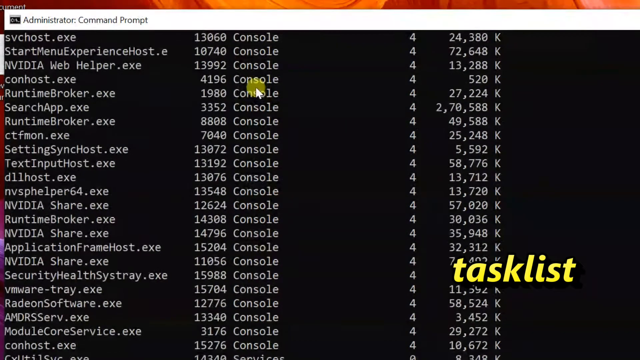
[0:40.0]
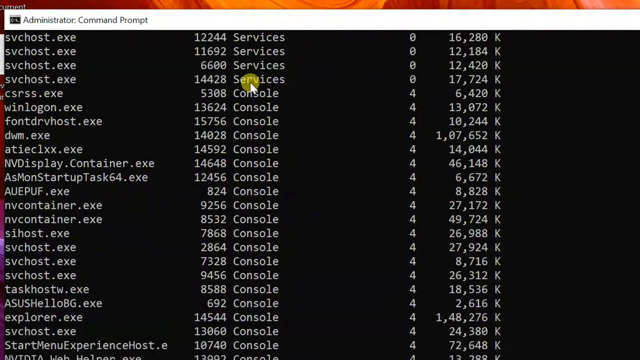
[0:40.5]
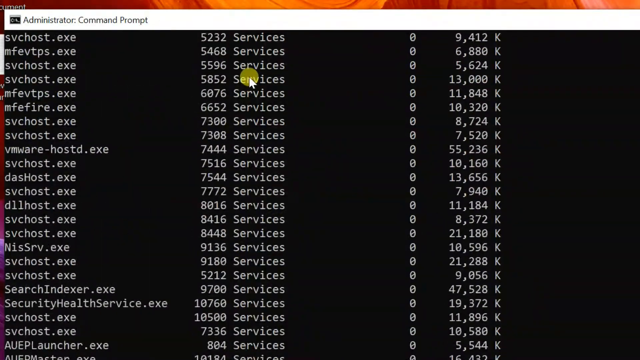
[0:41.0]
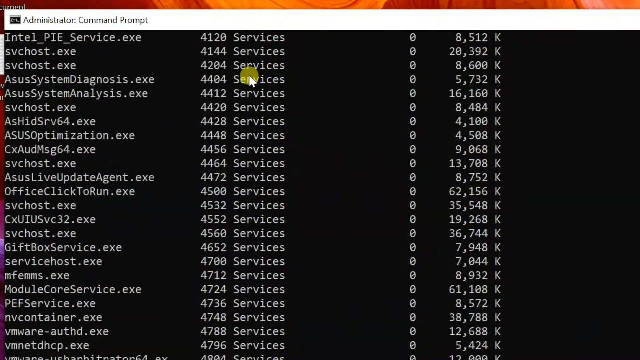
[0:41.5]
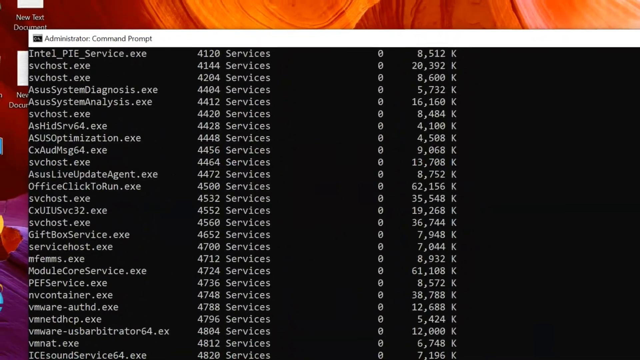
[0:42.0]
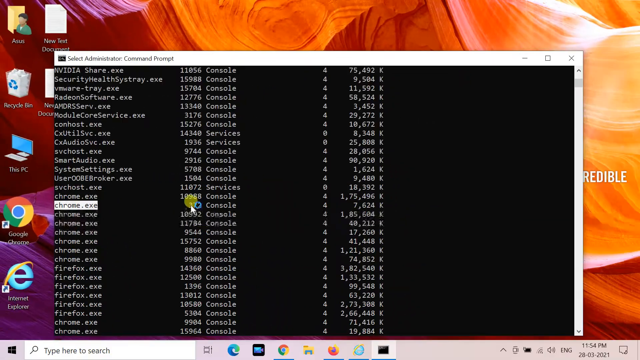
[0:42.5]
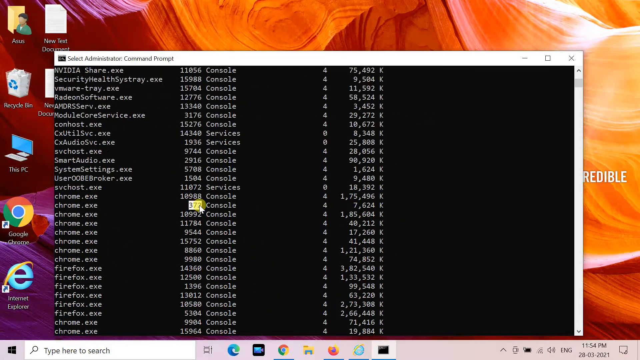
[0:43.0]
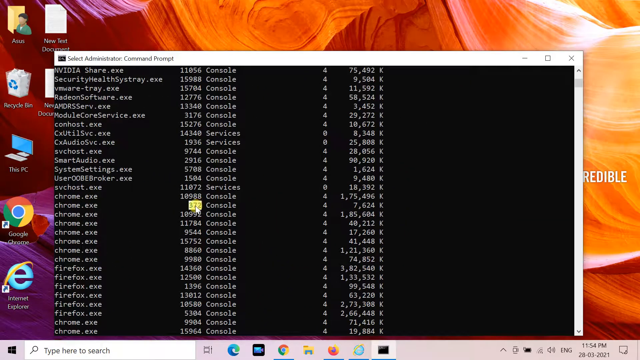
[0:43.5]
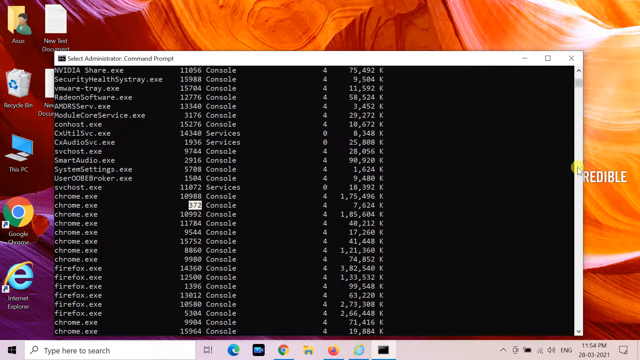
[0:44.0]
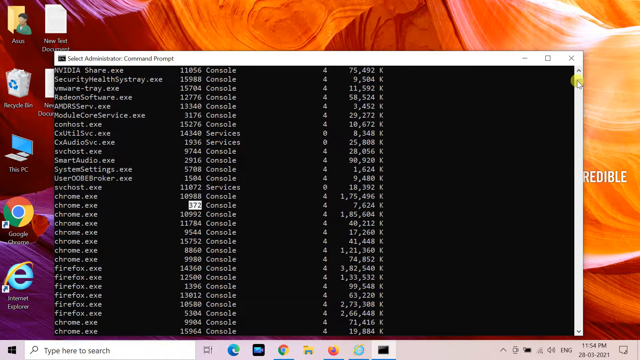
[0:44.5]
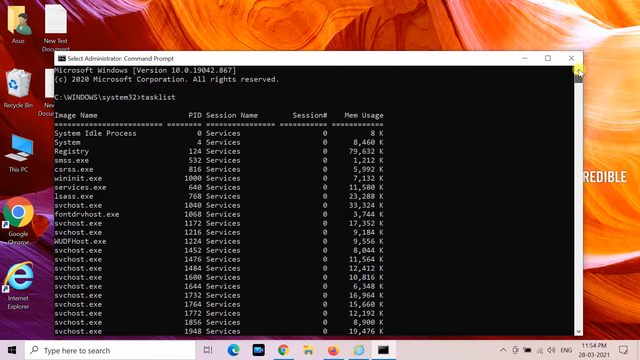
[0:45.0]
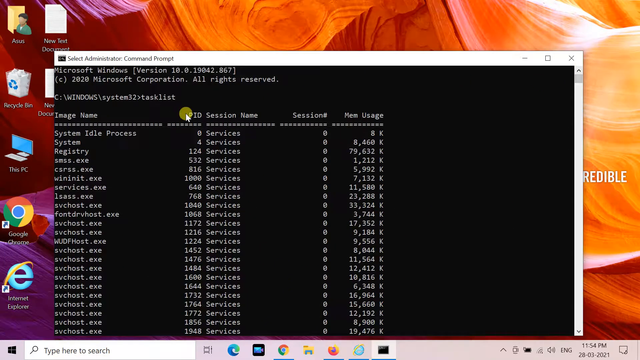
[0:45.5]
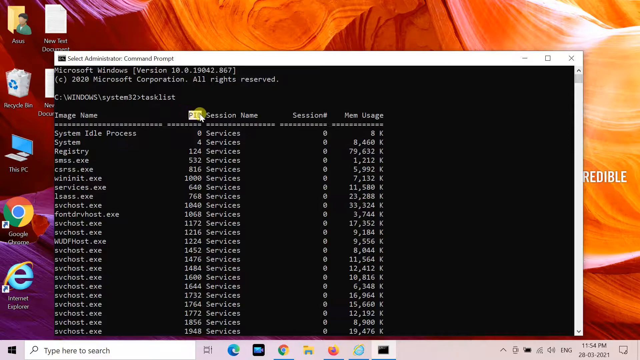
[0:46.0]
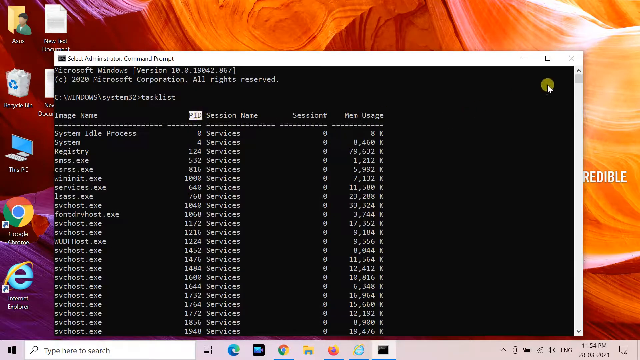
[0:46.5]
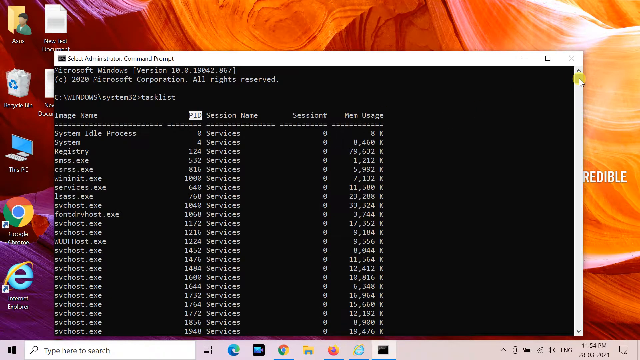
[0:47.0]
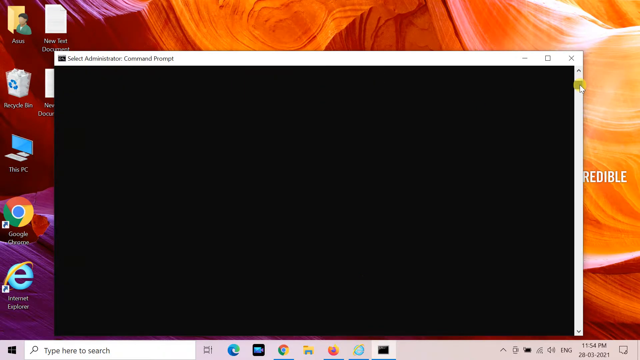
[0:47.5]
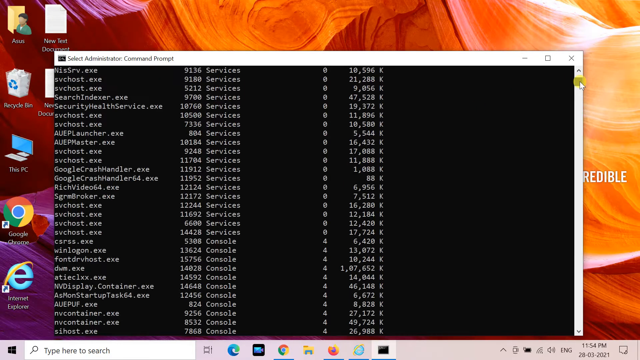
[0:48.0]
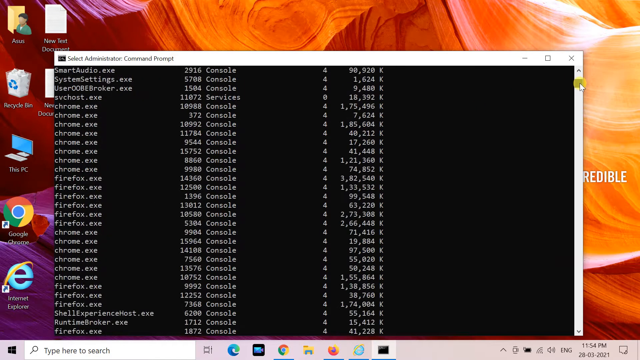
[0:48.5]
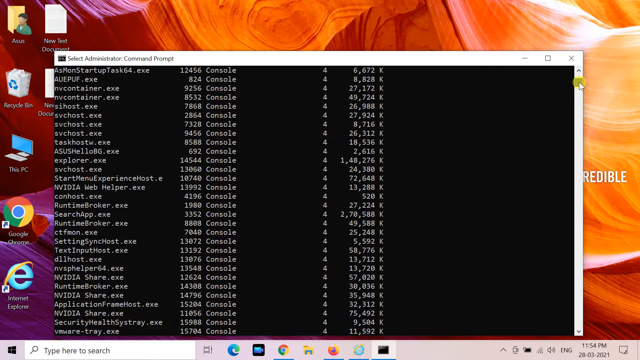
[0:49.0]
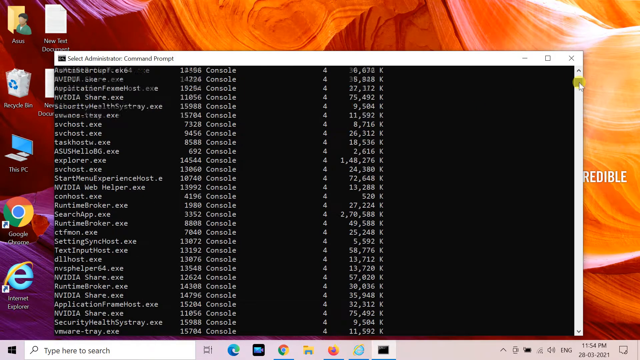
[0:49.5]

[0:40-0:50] The command prompt output of the task list is enlarged to take up virtually the whole screen. Attention is drawn to the column labeled PID, which the user highlights. The PID 372 is highlighted in the list of a service.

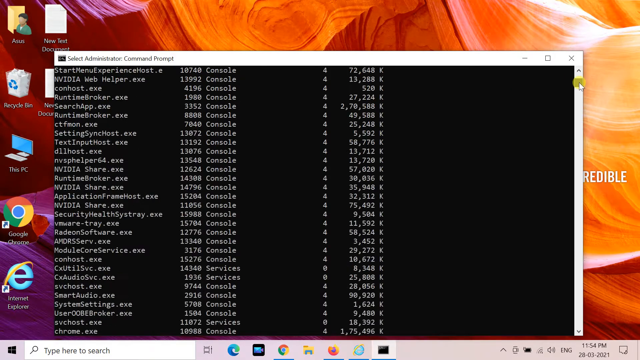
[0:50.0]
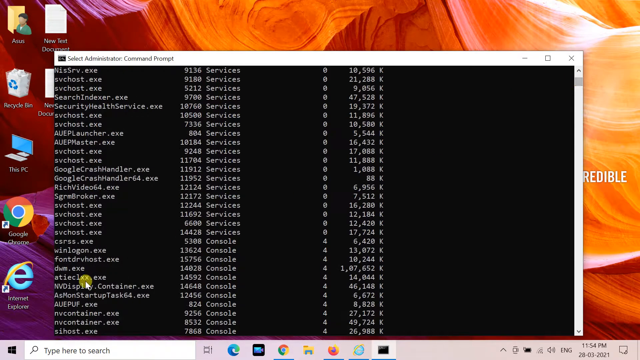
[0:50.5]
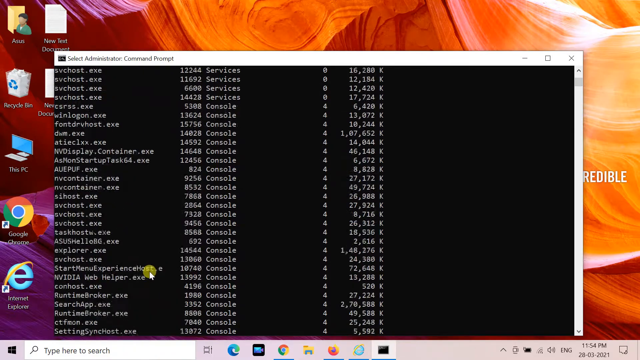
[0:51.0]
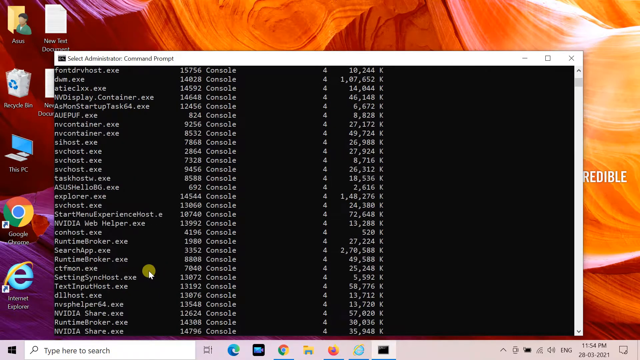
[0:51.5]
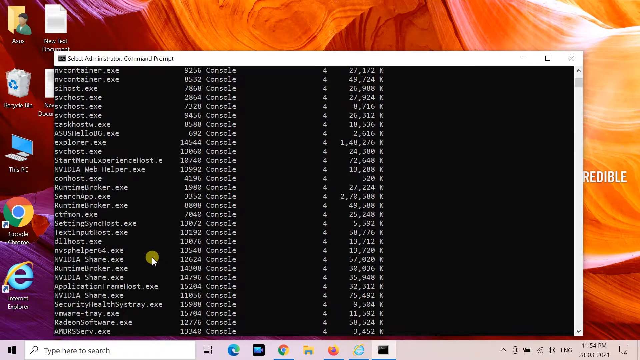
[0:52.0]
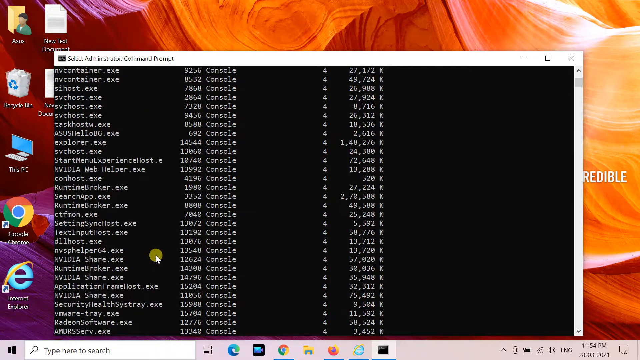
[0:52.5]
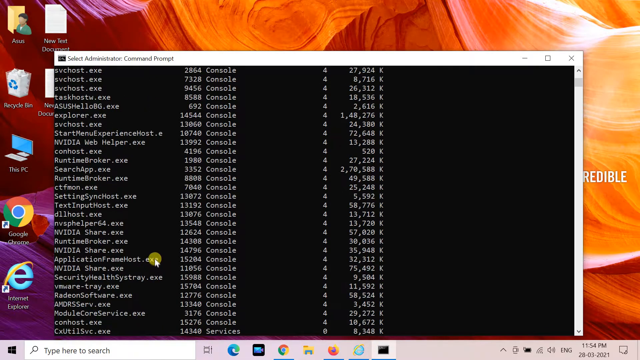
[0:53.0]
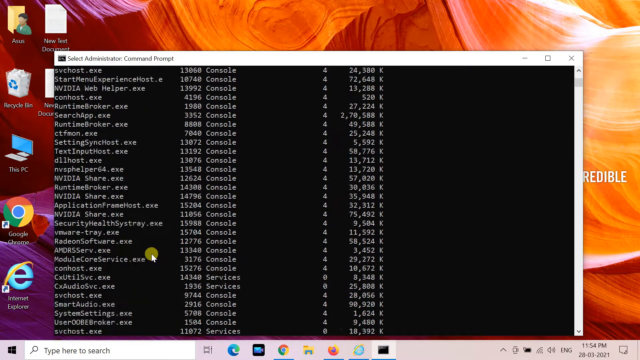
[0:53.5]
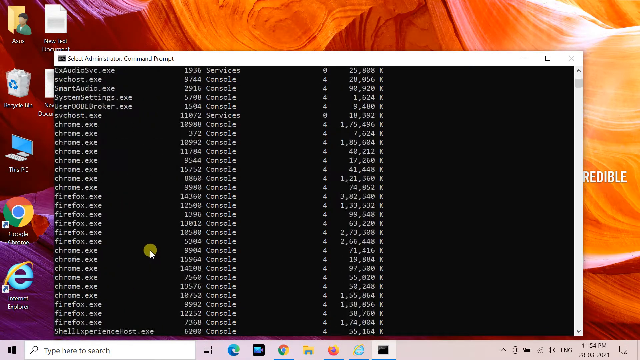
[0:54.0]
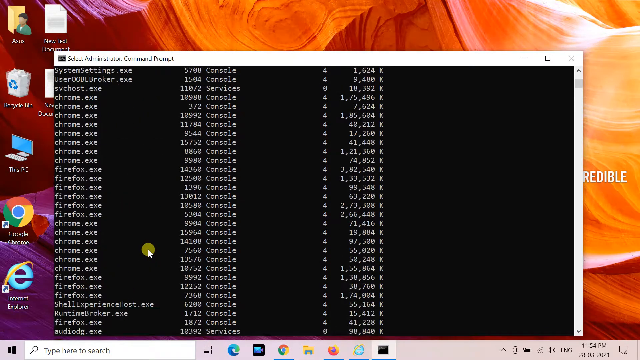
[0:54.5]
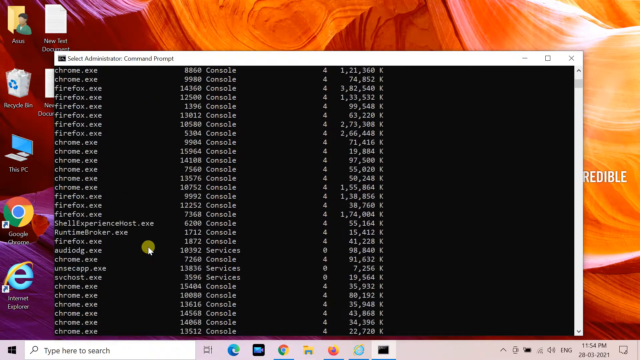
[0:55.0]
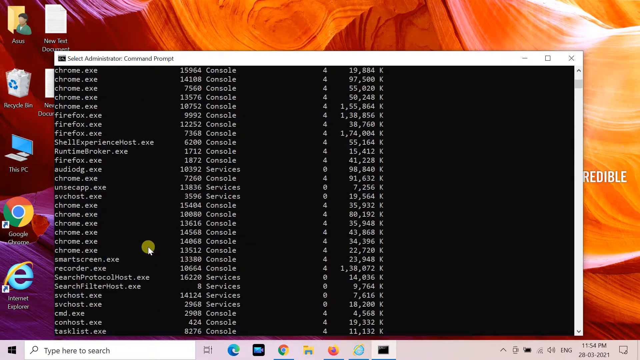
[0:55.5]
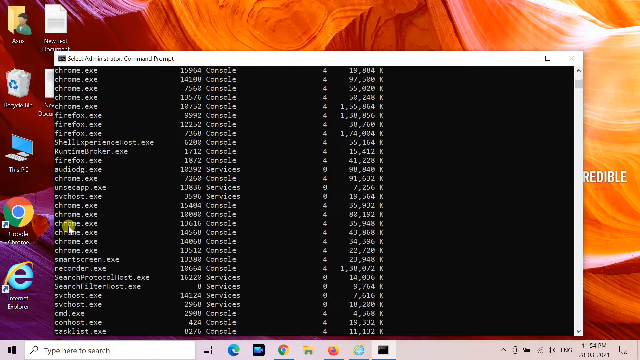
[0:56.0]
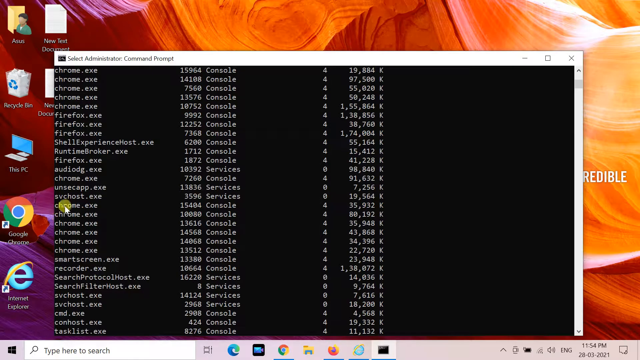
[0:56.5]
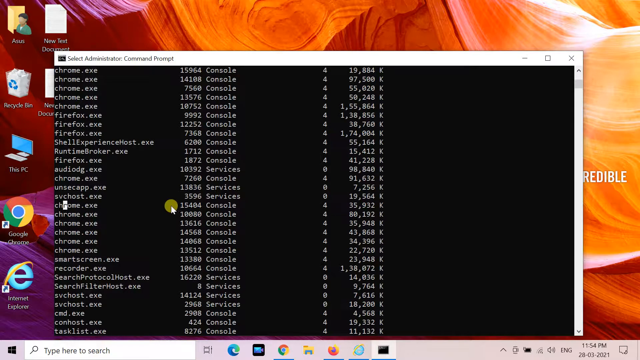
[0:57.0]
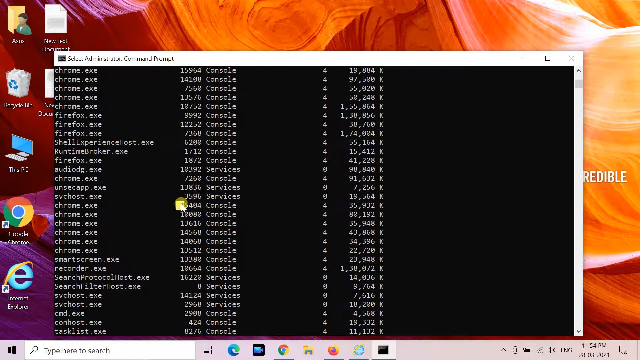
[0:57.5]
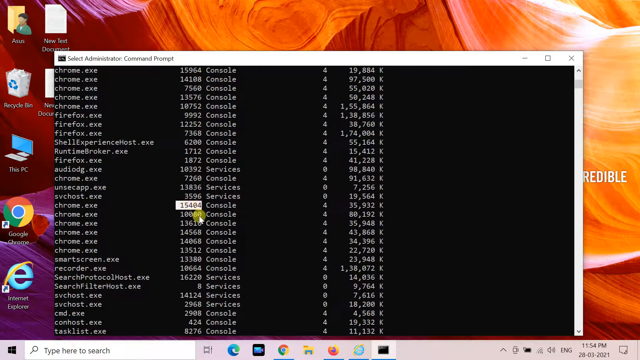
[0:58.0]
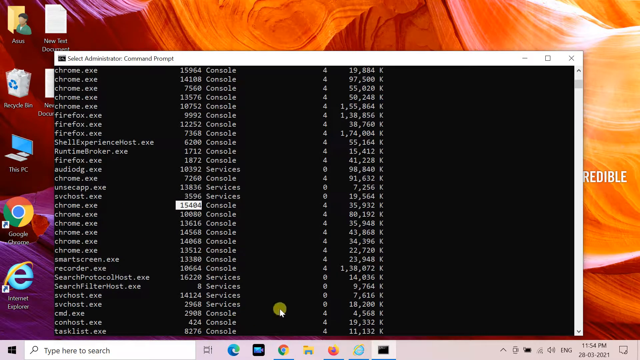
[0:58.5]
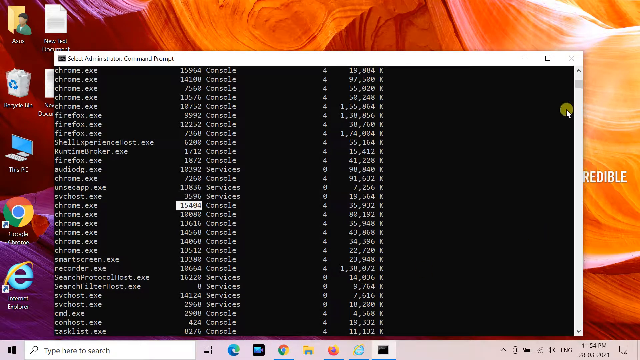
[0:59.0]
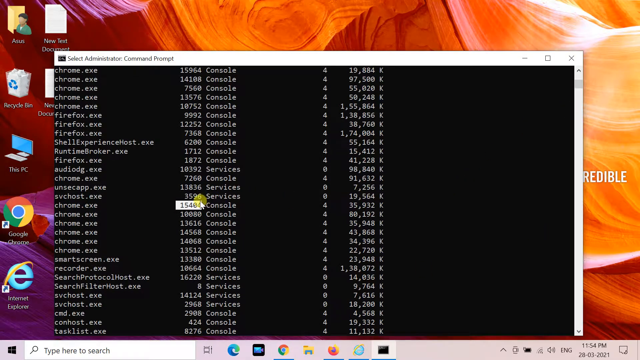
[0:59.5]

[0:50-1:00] The same four columns of the task list are shown in the command prompt. The user scrolls up and down through the processes, pointing out that each has a PID and a name, such as chrome.exe, which has various processes. Some text is then highlighted on the screen, but it is broken up and unreadable; it seems to be about getting the process ID at a command prompt.